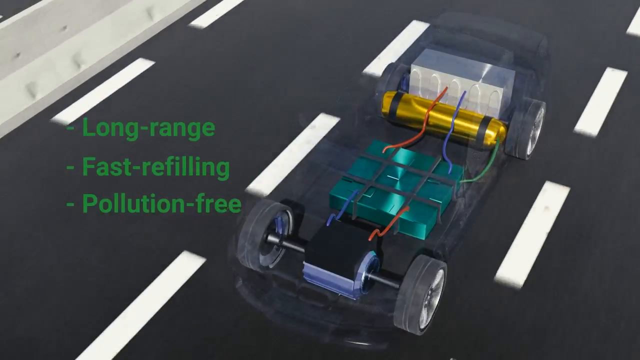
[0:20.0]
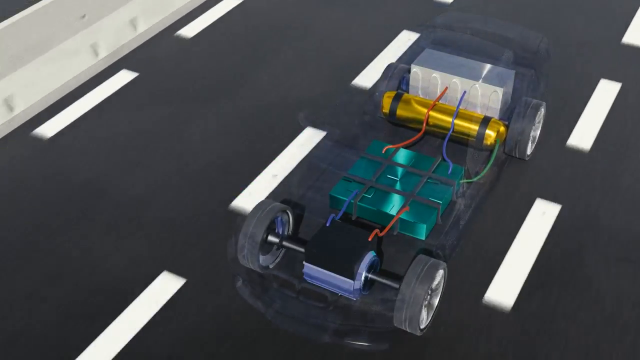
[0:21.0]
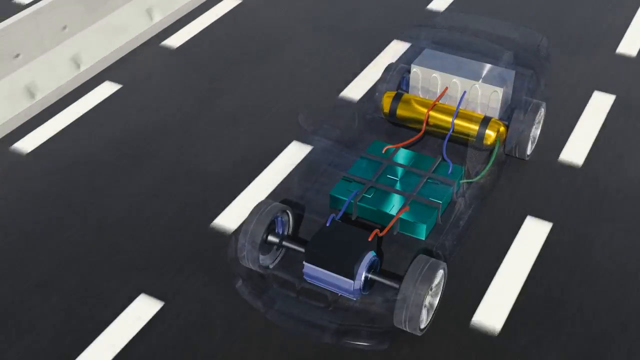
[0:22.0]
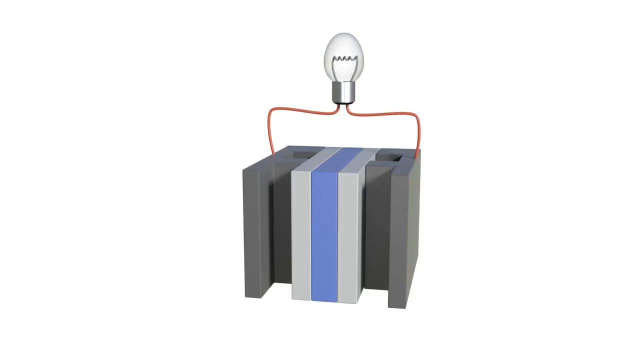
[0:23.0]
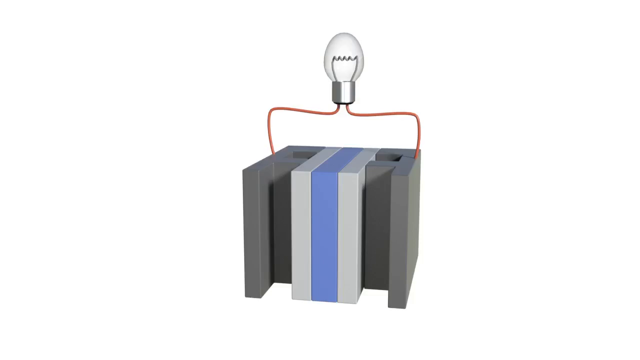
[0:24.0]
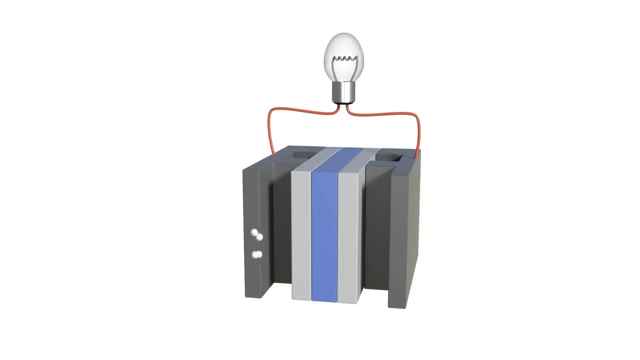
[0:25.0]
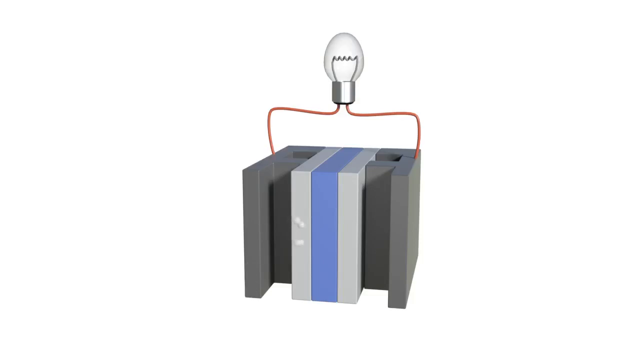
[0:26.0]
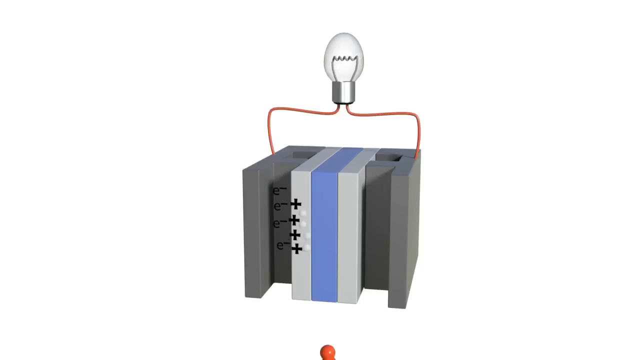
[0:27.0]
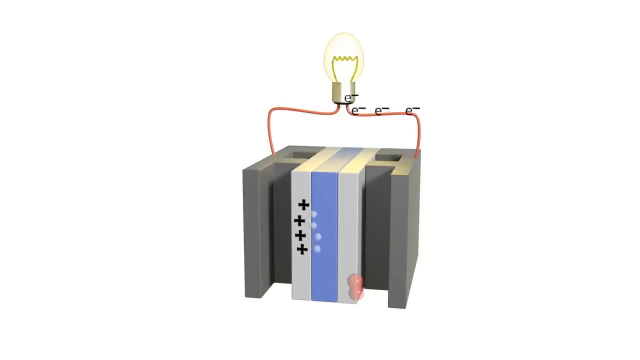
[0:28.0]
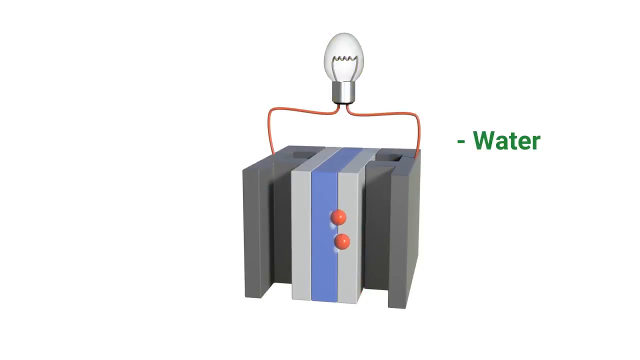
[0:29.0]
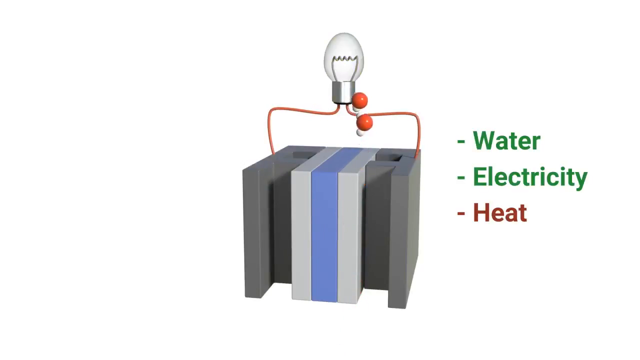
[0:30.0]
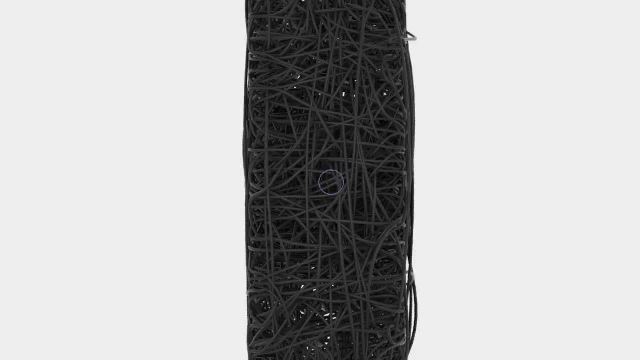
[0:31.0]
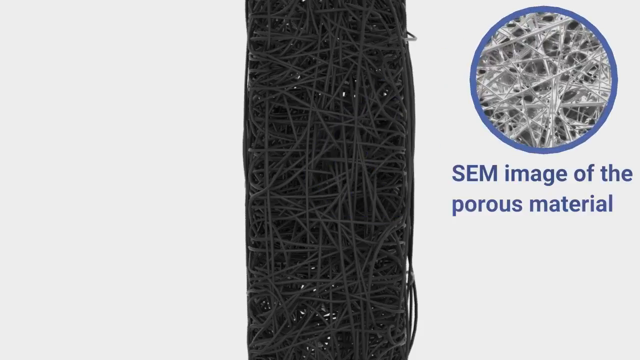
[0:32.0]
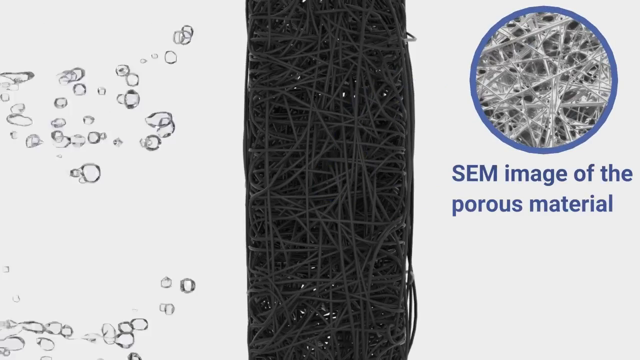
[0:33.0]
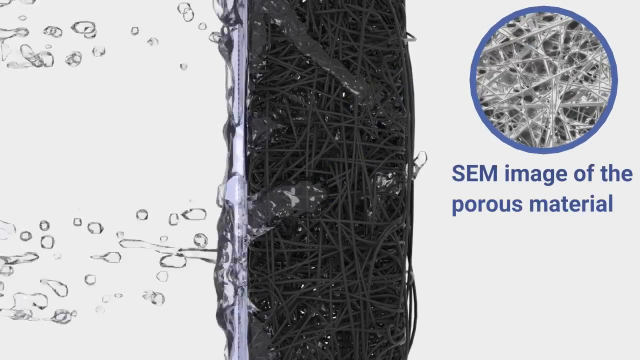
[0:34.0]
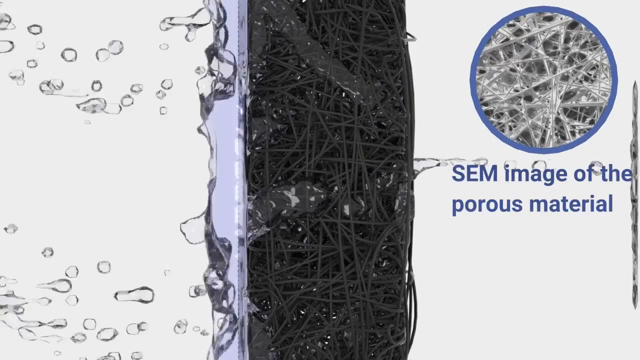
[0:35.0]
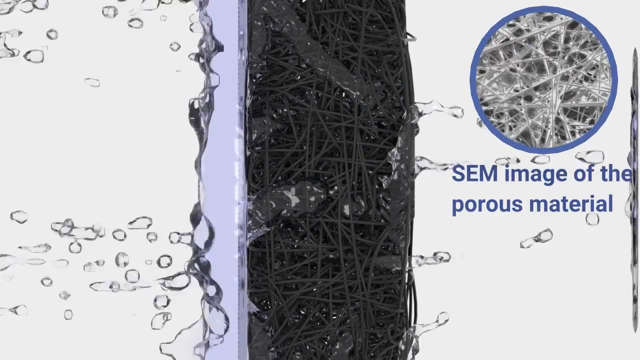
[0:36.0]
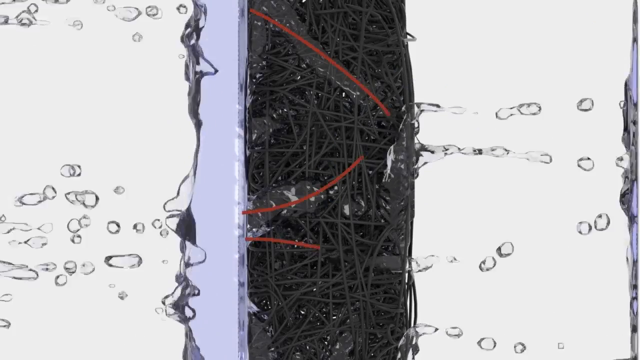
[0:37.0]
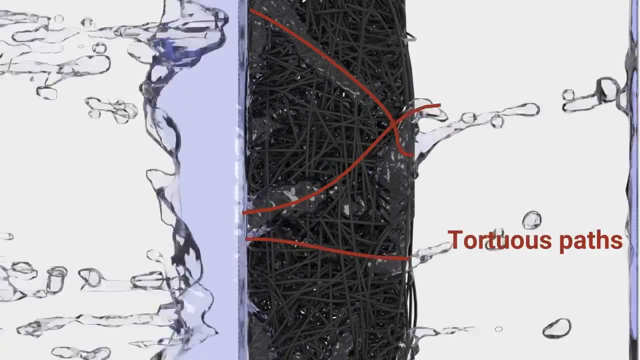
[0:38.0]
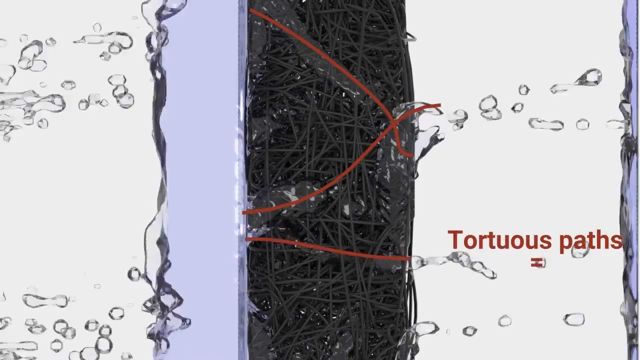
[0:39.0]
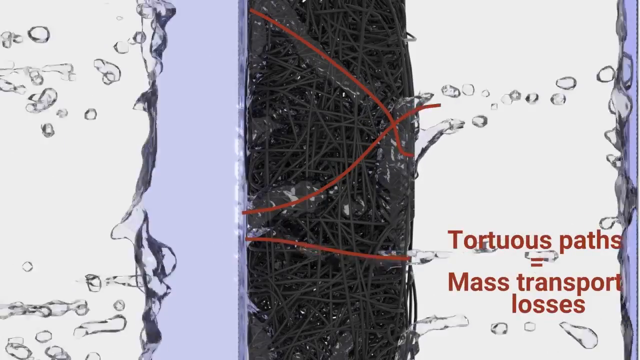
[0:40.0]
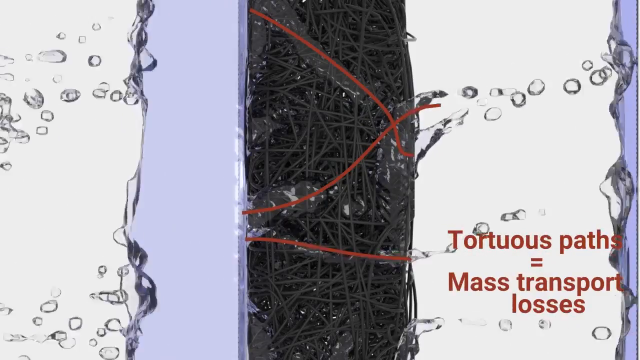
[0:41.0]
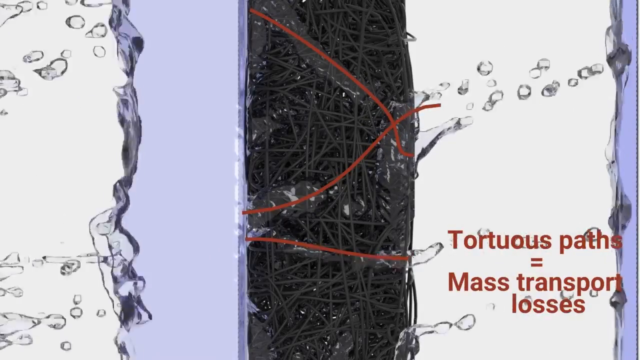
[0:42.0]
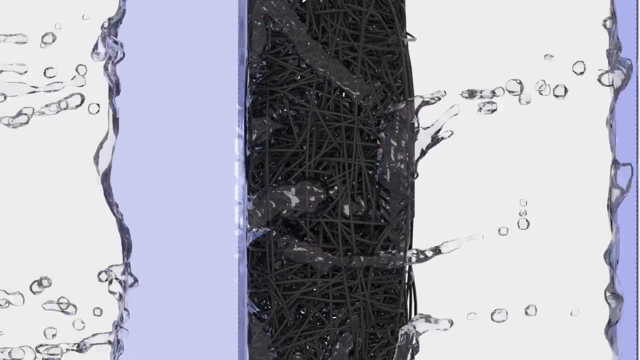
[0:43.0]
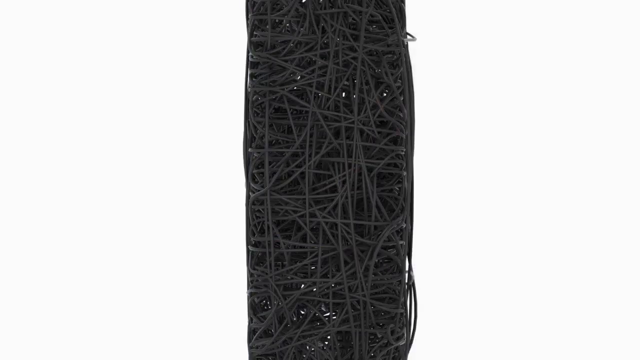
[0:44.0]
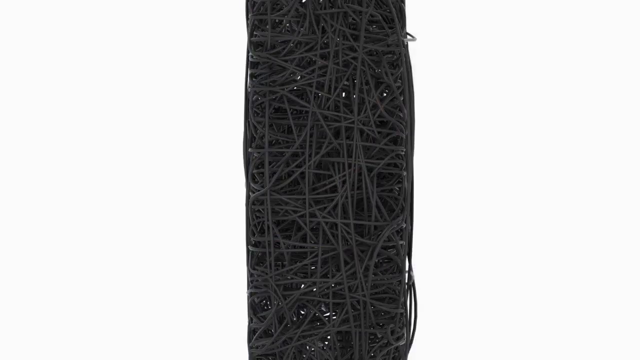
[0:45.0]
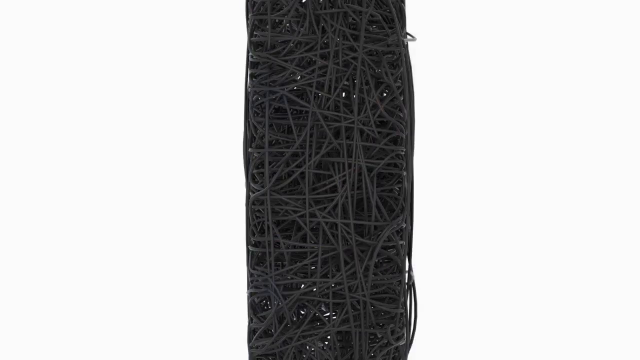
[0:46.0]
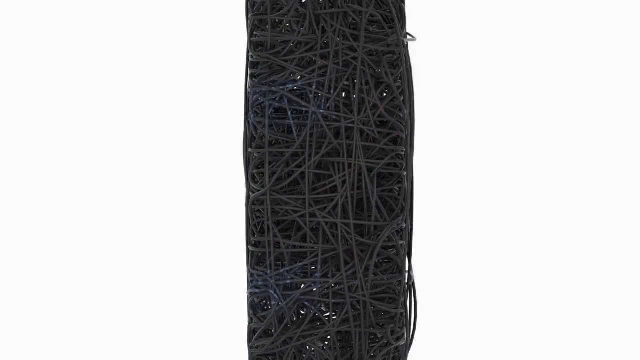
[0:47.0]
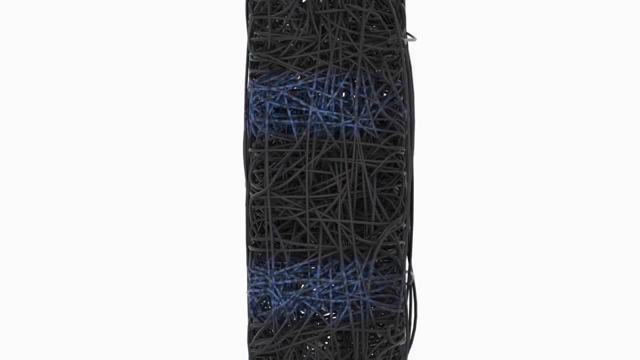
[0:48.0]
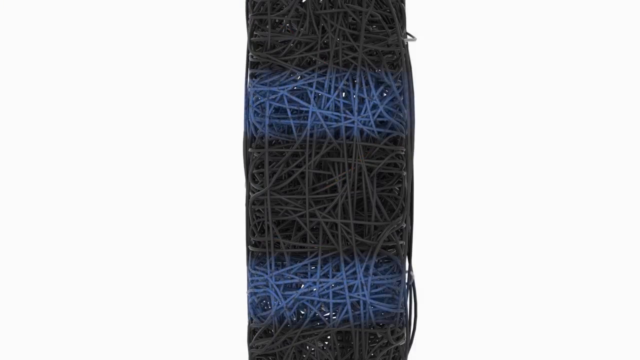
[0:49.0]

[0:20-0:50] The cutaway diagram of the car, showing the battery, engine, hydrogen and fuel cell, continues as the car drives in the middle of a stylized CG multi-lane freeway or highway with white dotted lines, with the green labels "long-range," "fast refilling," and "pollution-free" to the left of the cutaway. That disappears and the scene changes to a white background showing a light bulb connected by two wires to opposite sides of a vertically striped gray, blue and gray assembly that looks like a sideways D facing the camera. Little white dots move from the left side toward the middle, strike the light gray surface and turn into plus signs. Little symbols run along the wires to the other side and become red dots that drift up and out. On the right is a bullet-point list with a green "water," a green "electricity," and a red "heat." That disappears, and a new image on a white background shows a dark gray tangled, spaghetti-like wire structure in a vertical strip across the middle third of the screen. To the side is a circle diagram with a similar fibrous, spaghetti-like structure, looking perhaps like alveoli in the lungs, captioned "SEM image of the porous material." Water moves from the left side of the screen toward the fibrous structure as if falling; only some of it goes into the structure, and some drips out the other side. Little red lines trace the water's paths through the structure, and a red caption in the lower right reads "tortuous paths equals mass transport losses," suggesting perhaps an inefficient structure. Water fills up on the left-hand side before the video cuts away.